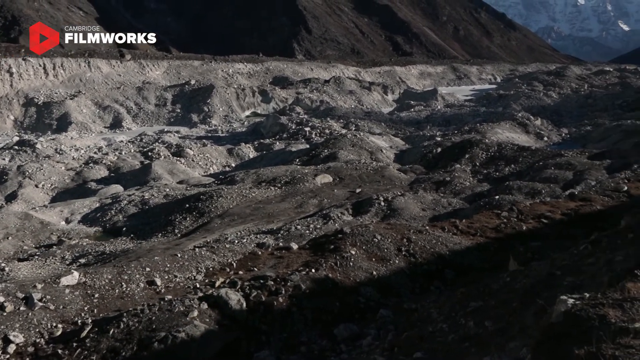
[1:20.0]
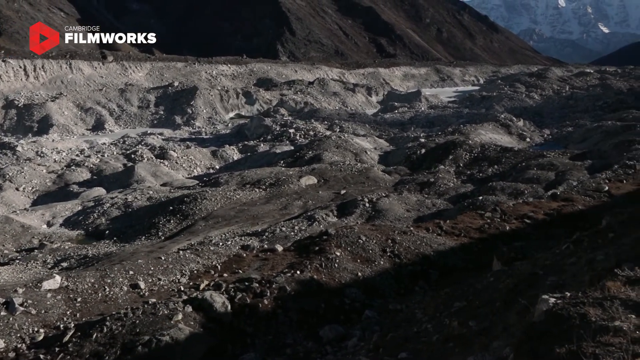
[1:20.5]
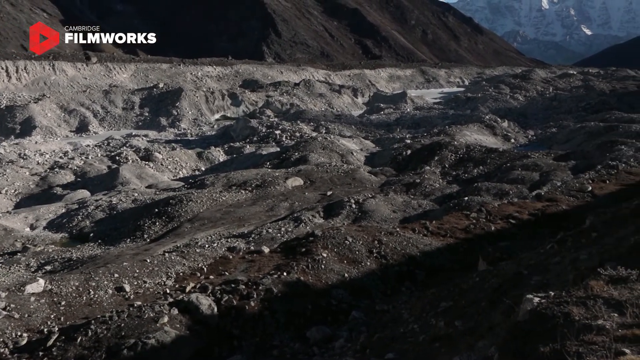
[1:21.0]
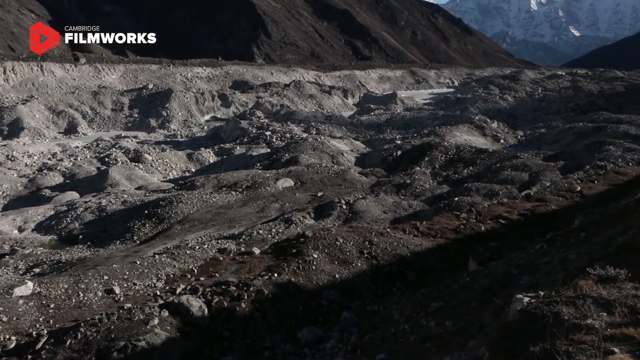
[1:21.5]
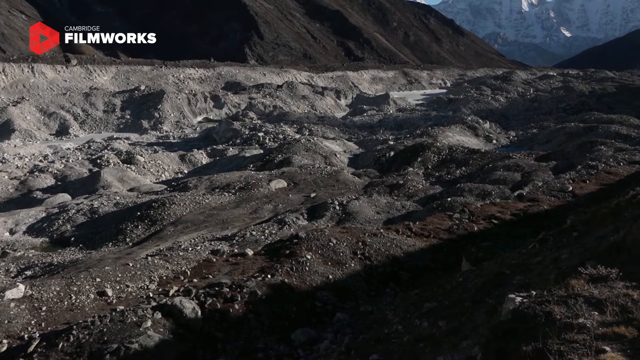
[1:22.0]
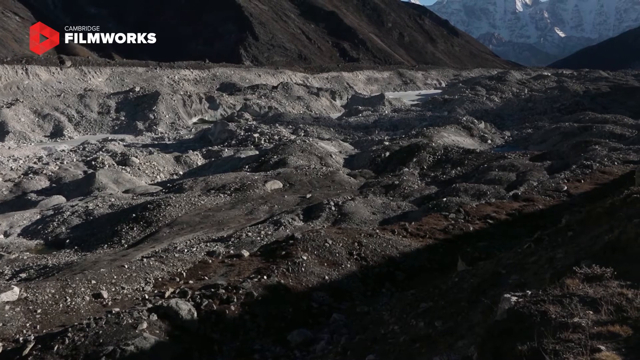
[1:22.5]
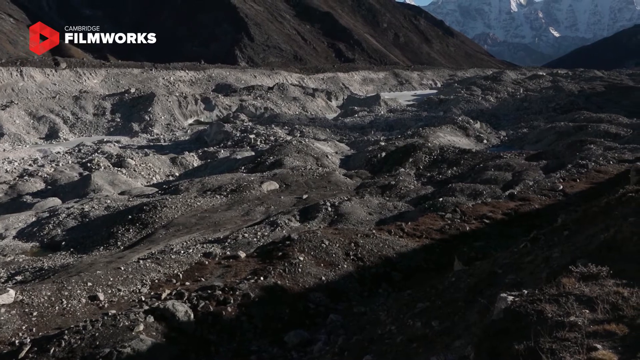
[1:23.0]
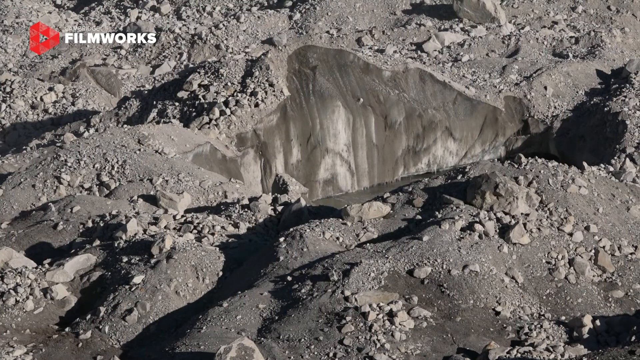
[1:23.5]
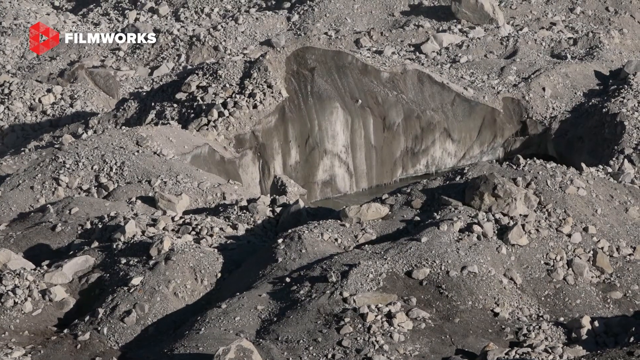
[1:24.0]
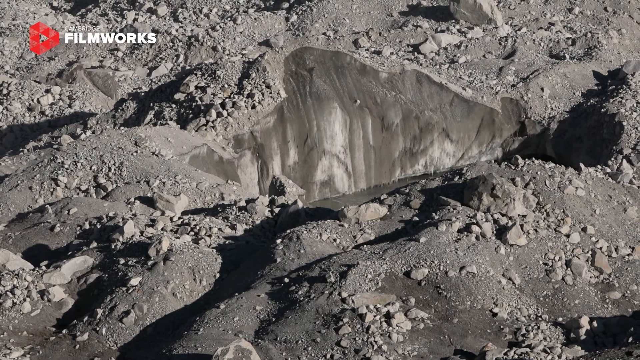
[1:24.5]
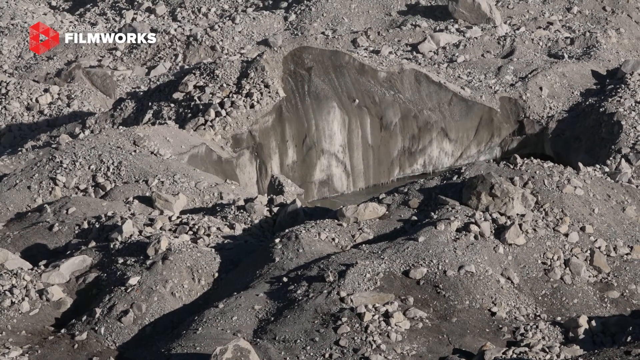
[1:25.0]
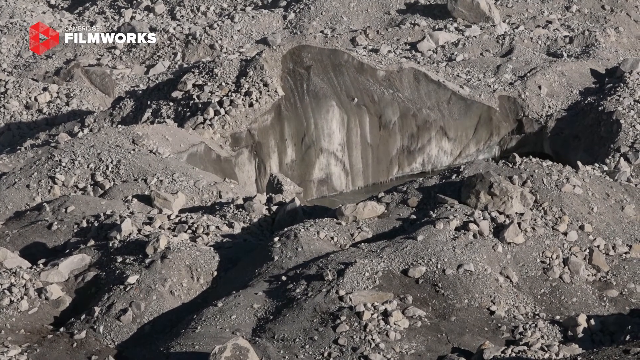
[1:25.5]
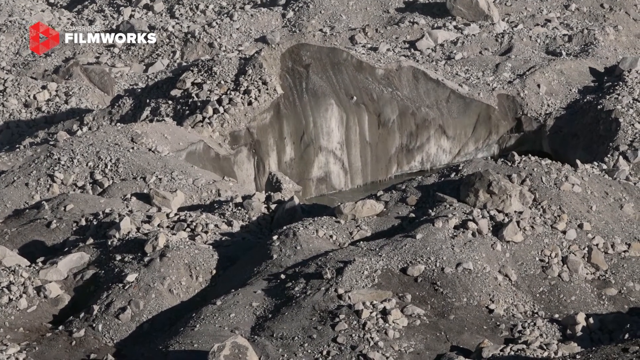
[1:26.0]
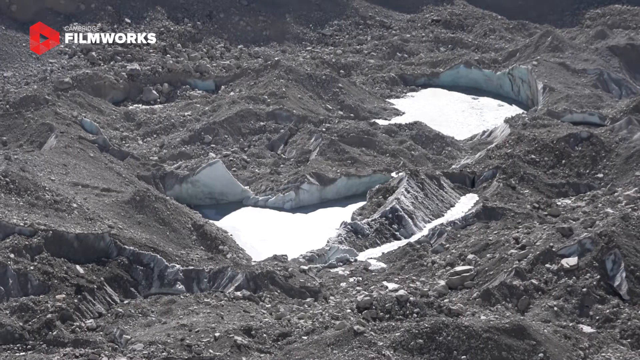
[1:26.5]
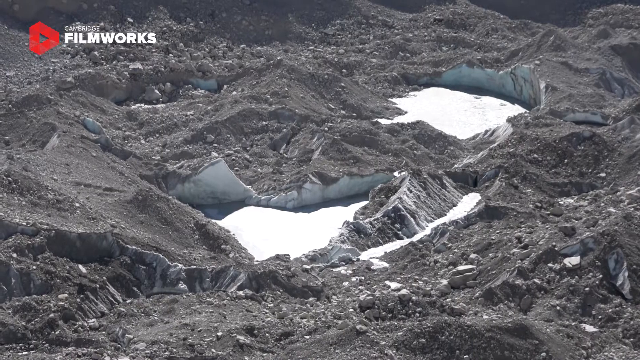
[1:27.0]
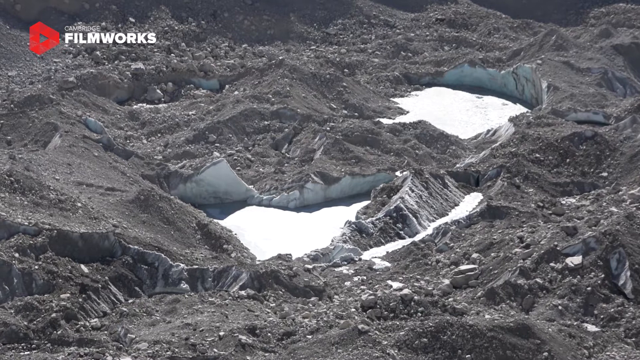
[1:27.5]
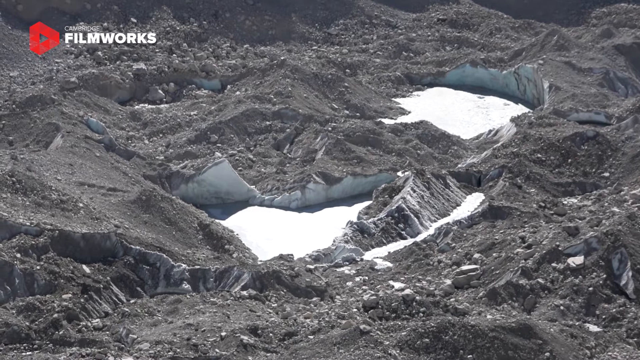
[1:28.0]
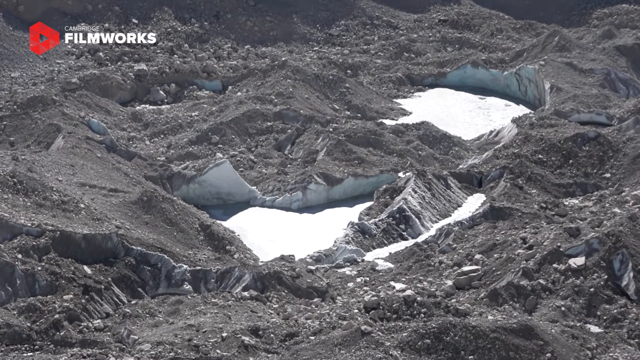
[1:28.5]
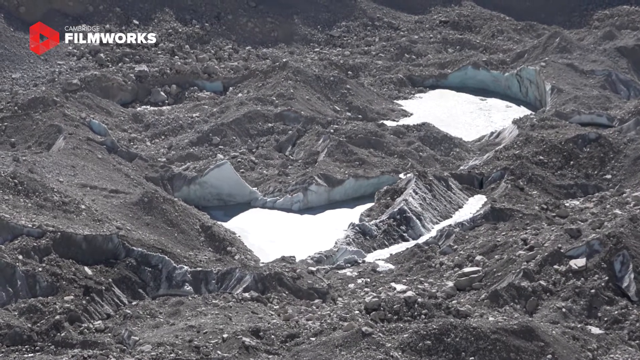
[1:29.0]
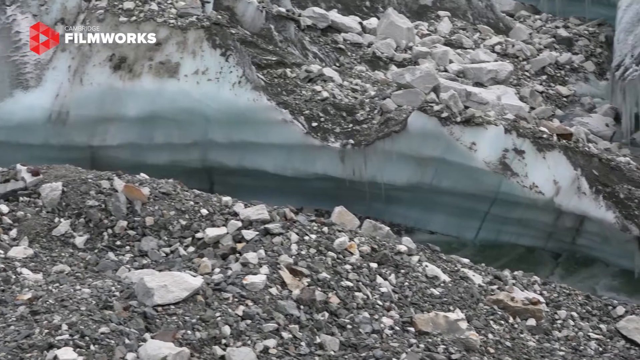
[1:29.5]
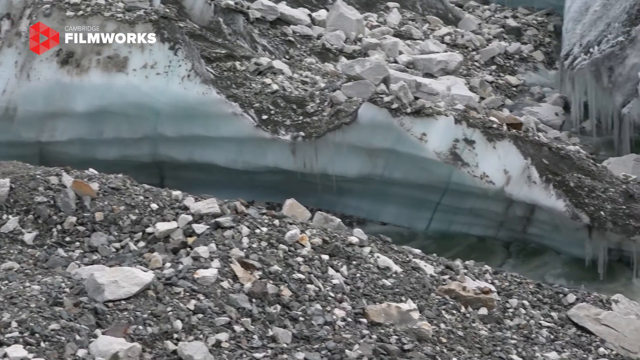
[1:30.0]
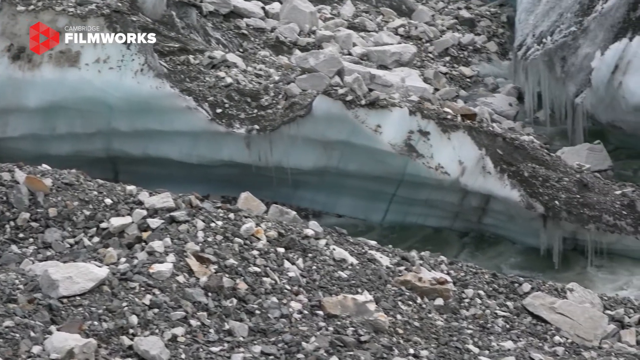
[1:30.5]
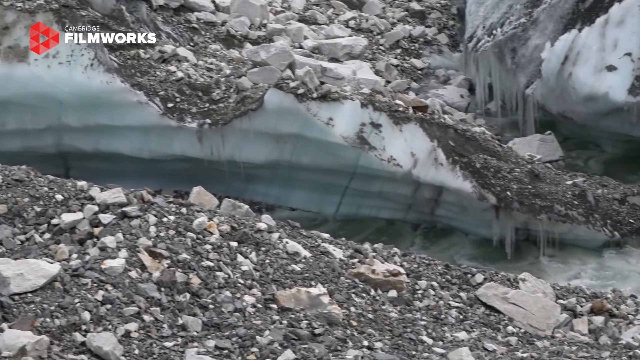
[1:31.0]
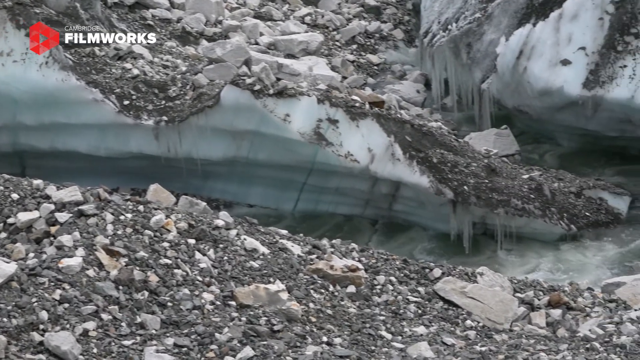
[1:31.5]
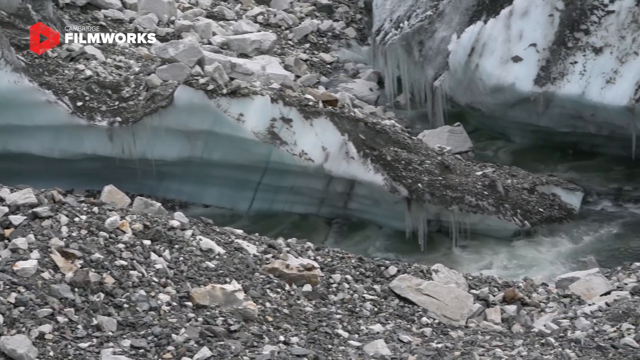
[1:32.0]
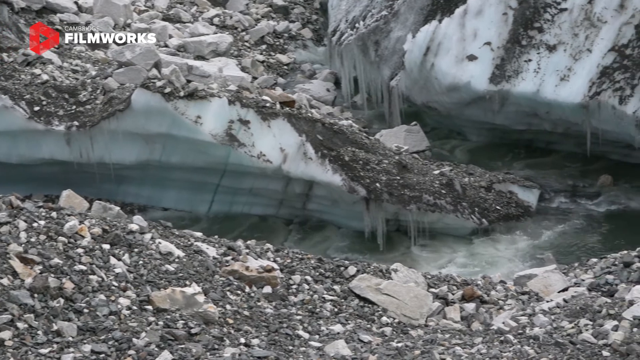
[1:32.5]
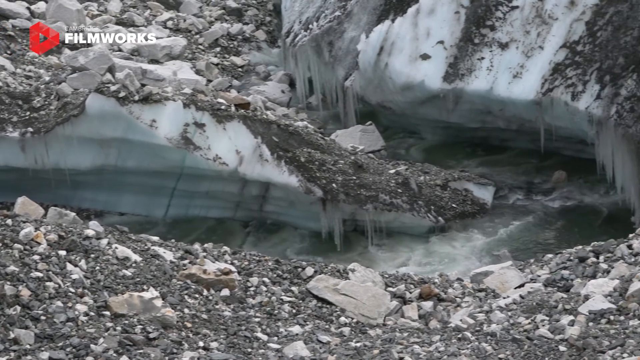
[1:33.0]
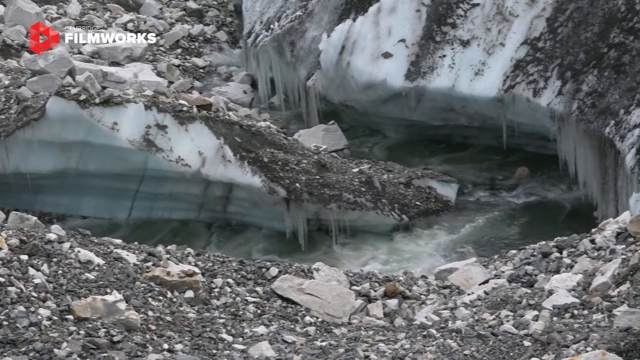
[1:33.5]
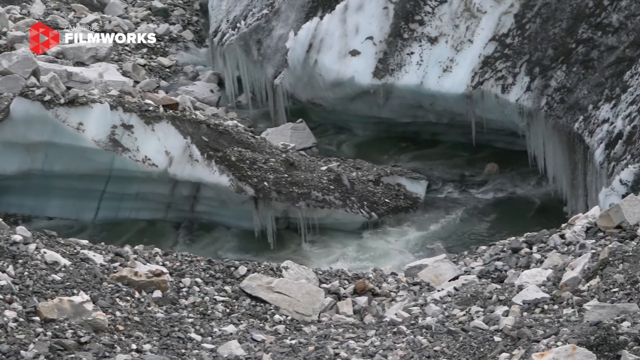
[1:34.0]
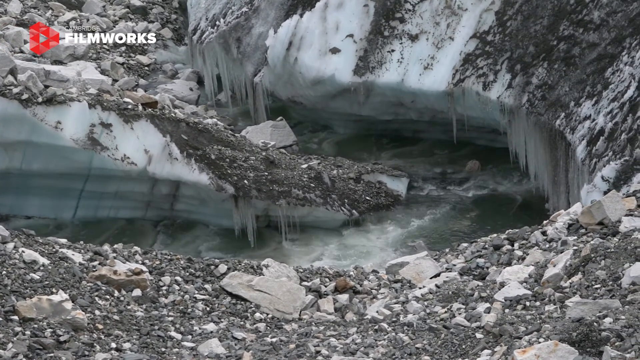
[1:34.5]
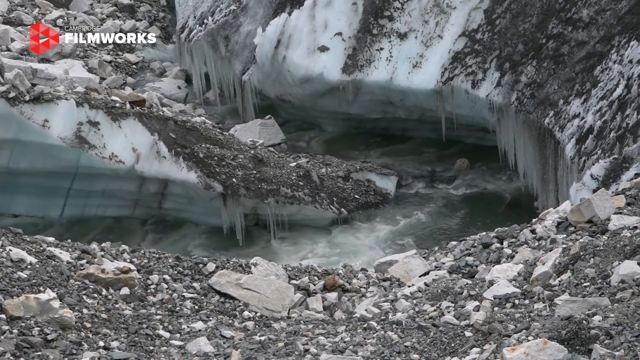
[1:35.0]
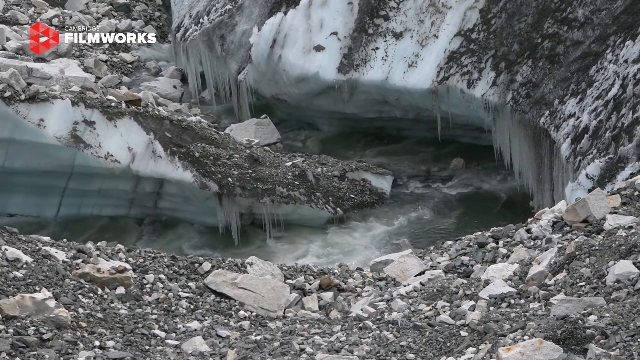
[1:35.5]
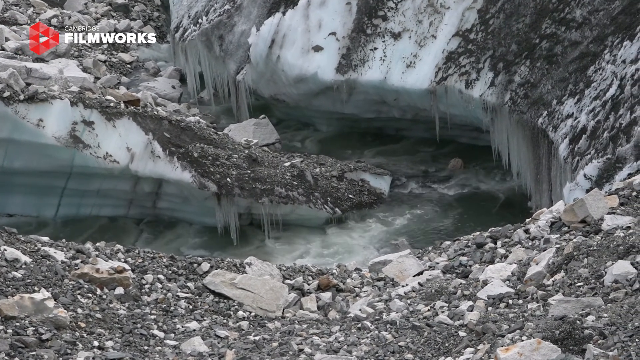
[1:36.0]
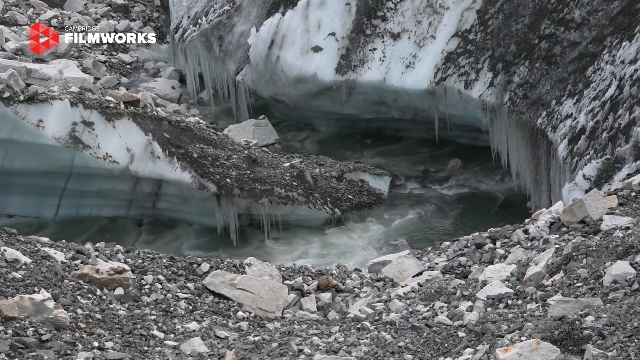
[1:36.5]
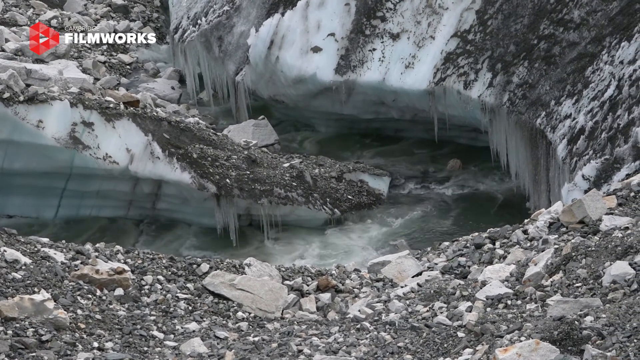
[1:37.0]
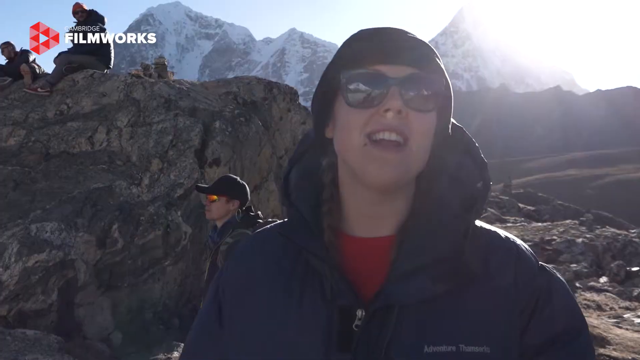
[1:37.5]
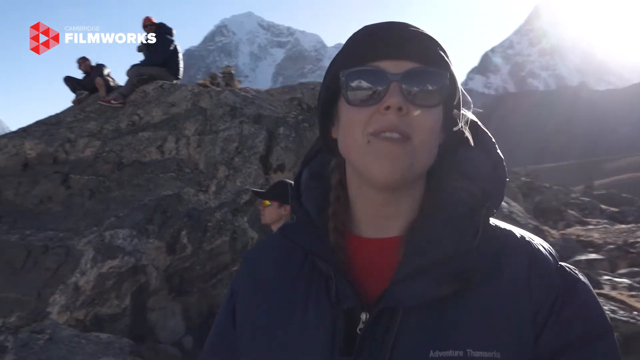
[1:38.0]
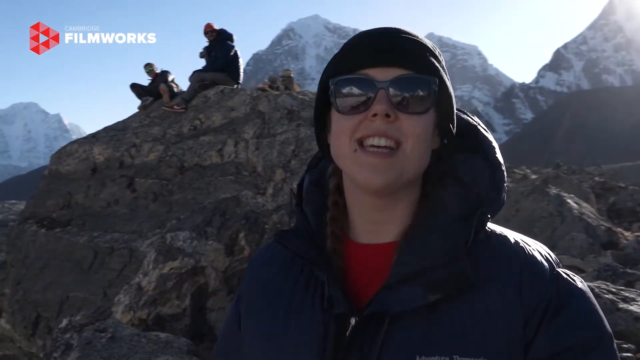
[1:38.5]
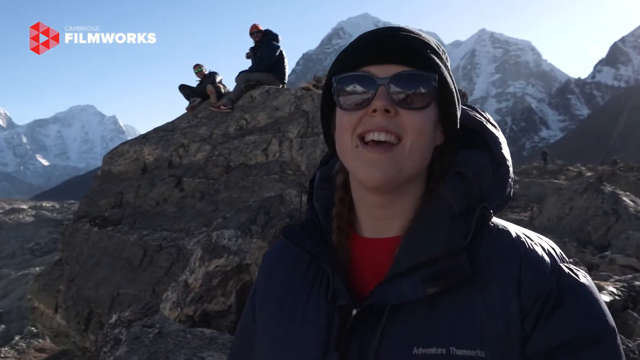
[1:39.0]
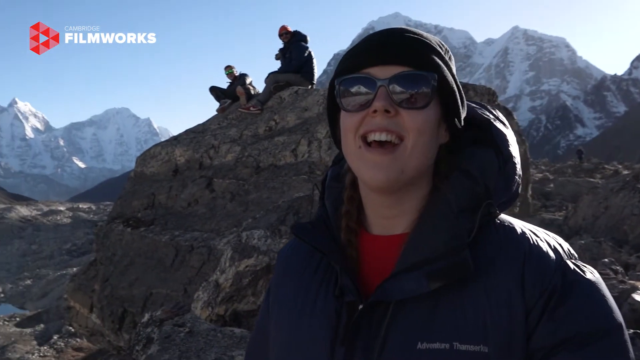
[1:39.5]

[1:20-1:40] The camera zooms in on the uneven terrain, focusing on a piece that looks like the remnant of an avalanche or mudslide: a completely smooth, vertical drop where a piece of the earth seems to have come off. Another shot of the base camp or glacier valley shows pools full of snow, while the surrounding area has no snow, just dirt and rocks; it is a mixture of ice, rocks and dirt. There appears to be a small mountain creek formed from the melting glaciers, with runoff forming a stream between the ice and pooling at this section. Then a group of hikers is on a rocky boulder, looking over the glacier valley. In the foreground is a female hiker wearing a beanie, a very thick puffer jacket and sunglasses. The camera keeps panning to this area of the glacier valley.